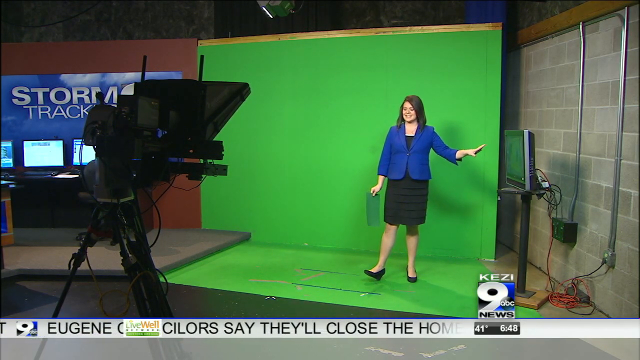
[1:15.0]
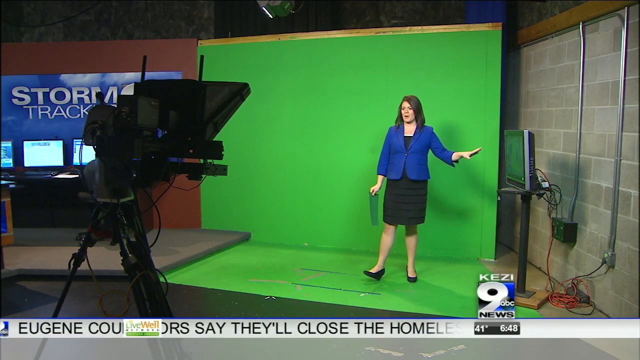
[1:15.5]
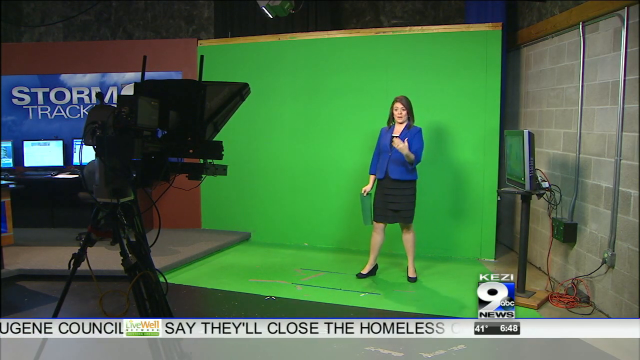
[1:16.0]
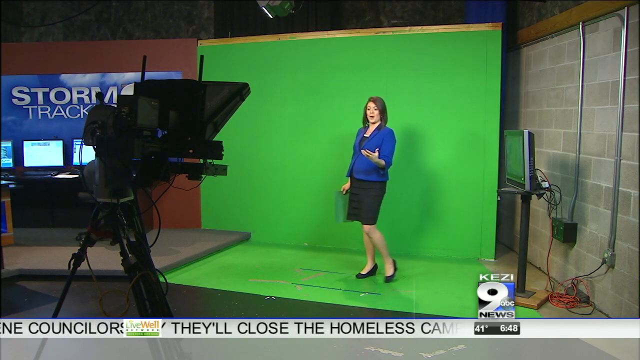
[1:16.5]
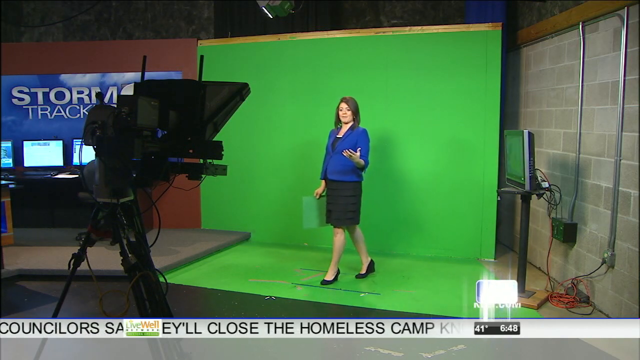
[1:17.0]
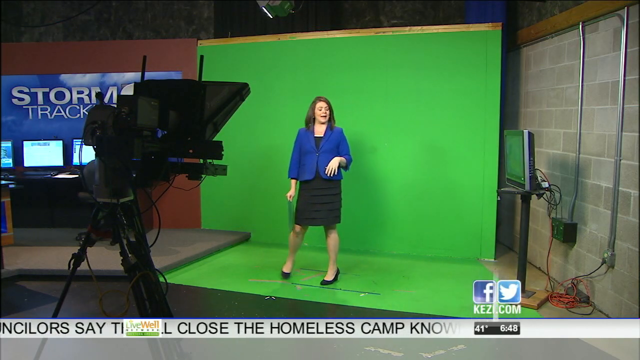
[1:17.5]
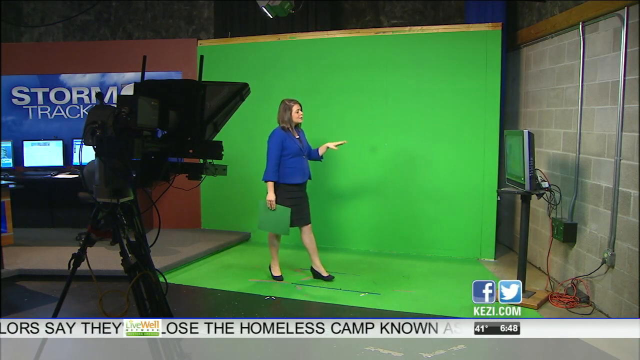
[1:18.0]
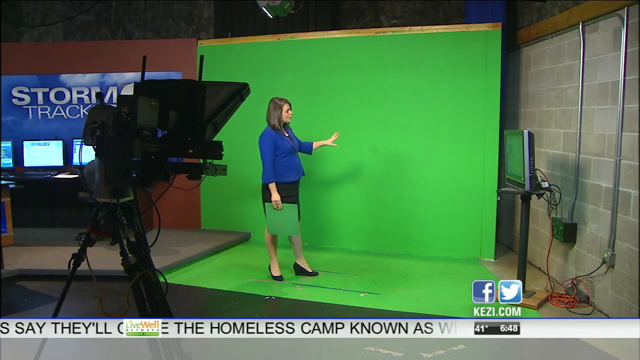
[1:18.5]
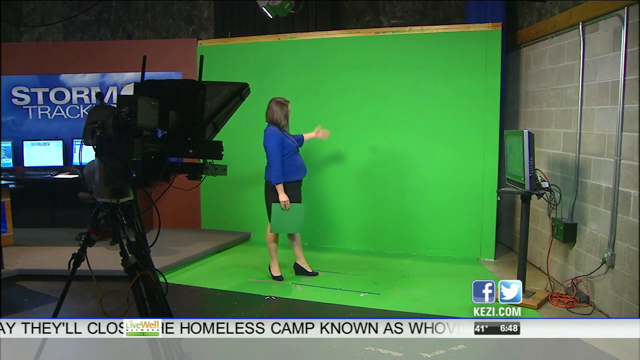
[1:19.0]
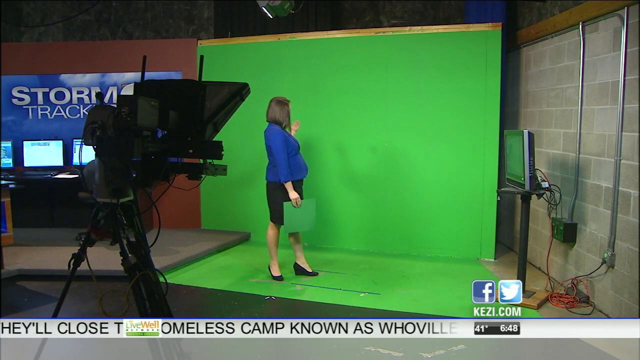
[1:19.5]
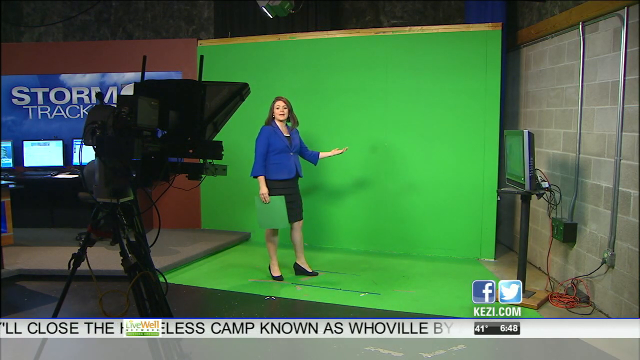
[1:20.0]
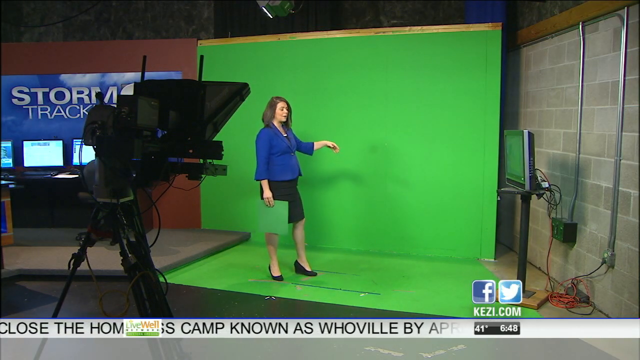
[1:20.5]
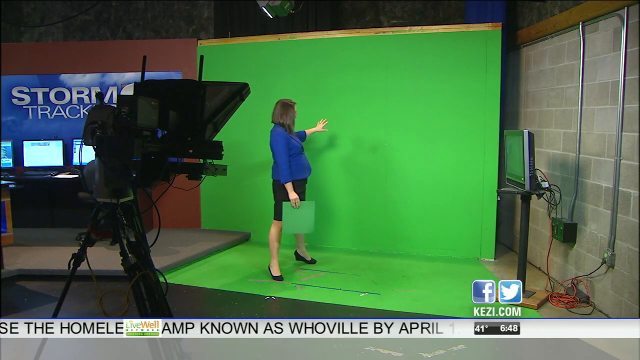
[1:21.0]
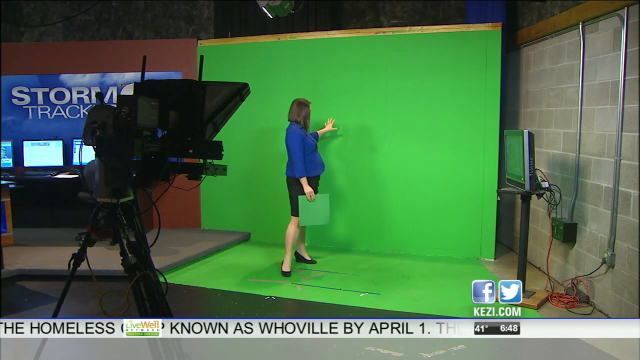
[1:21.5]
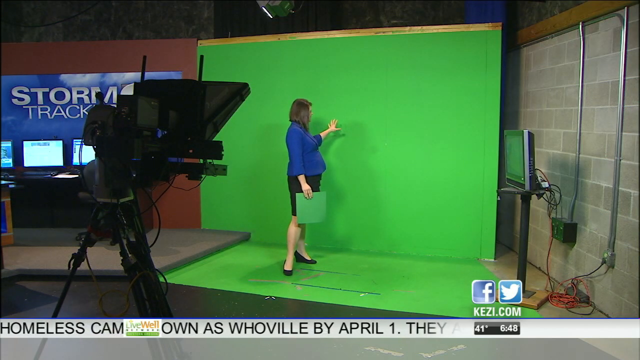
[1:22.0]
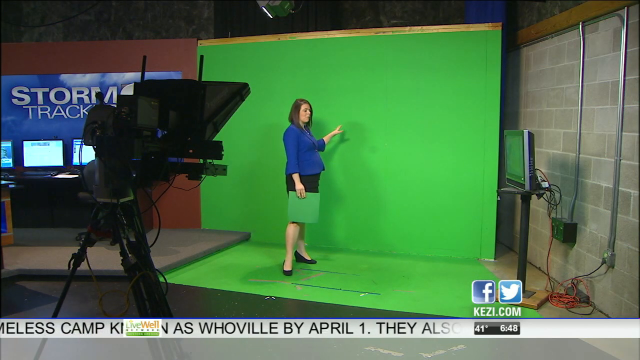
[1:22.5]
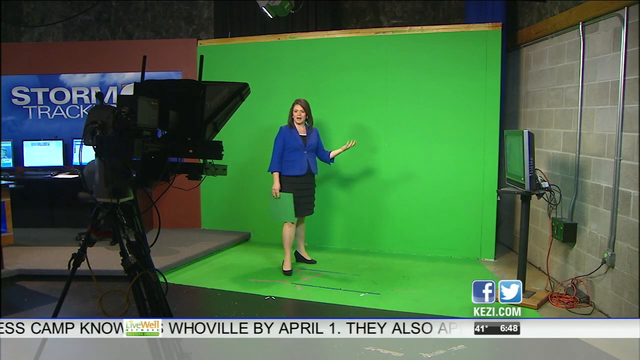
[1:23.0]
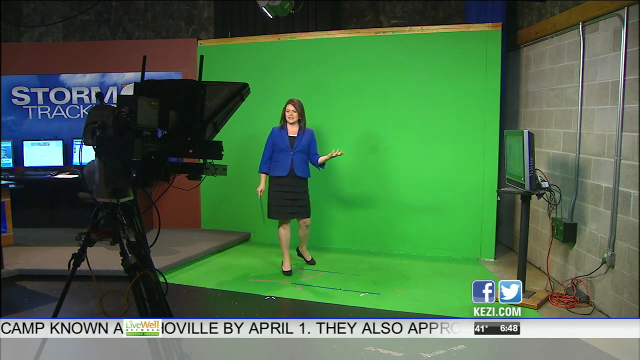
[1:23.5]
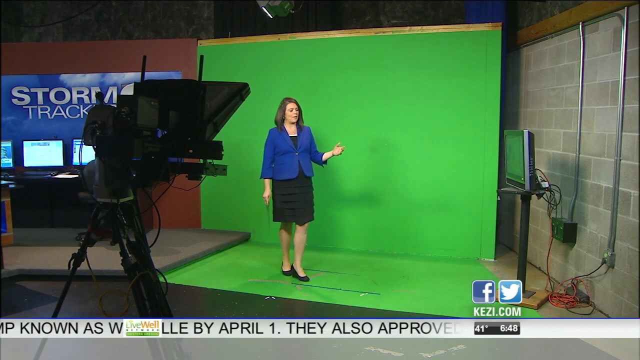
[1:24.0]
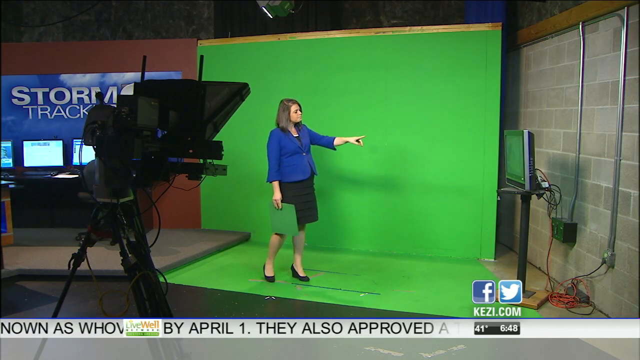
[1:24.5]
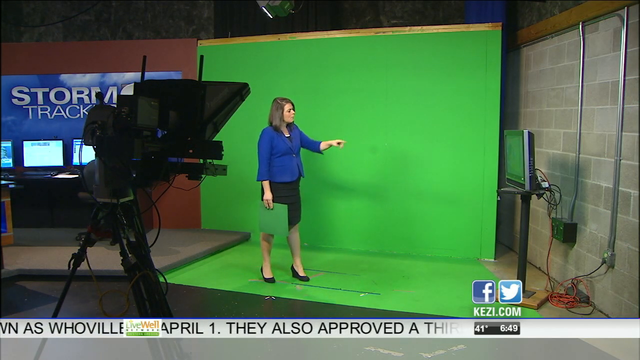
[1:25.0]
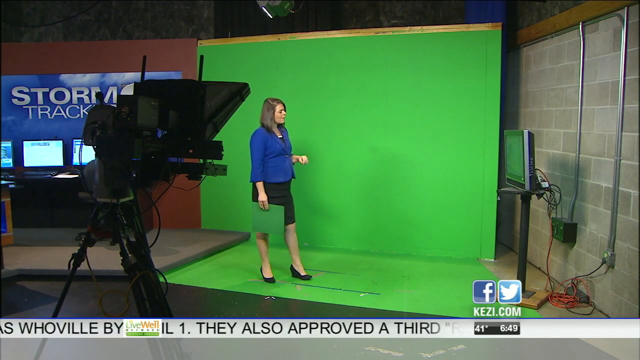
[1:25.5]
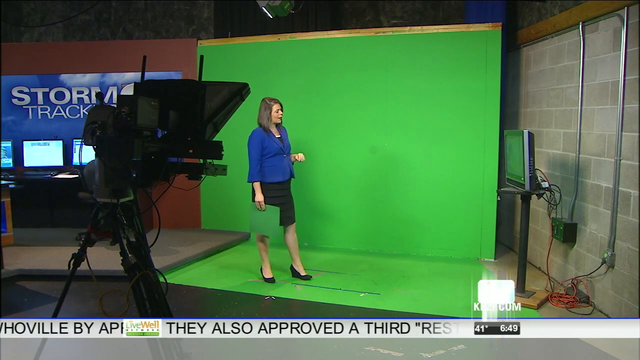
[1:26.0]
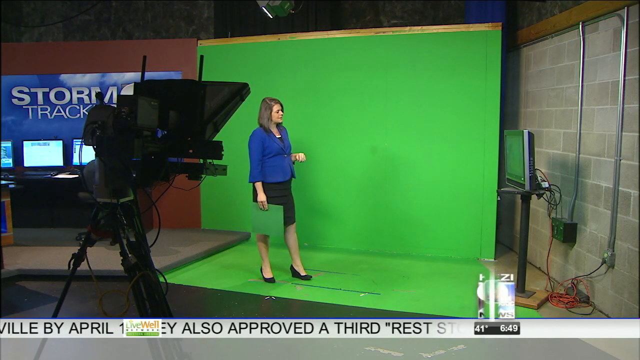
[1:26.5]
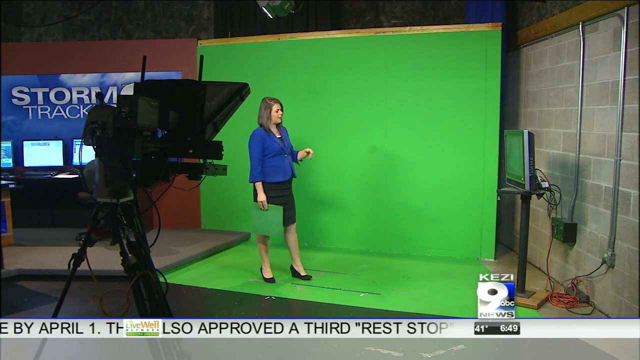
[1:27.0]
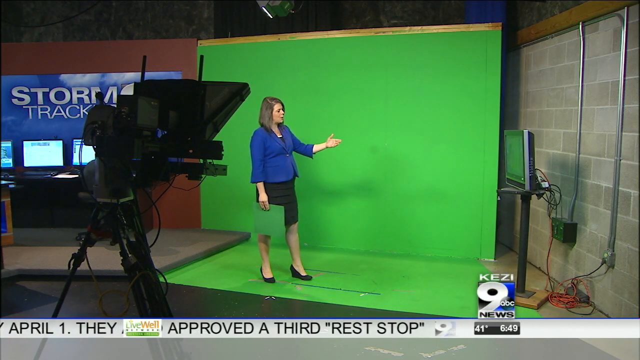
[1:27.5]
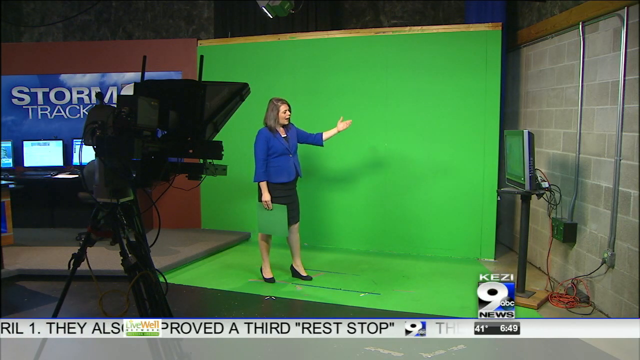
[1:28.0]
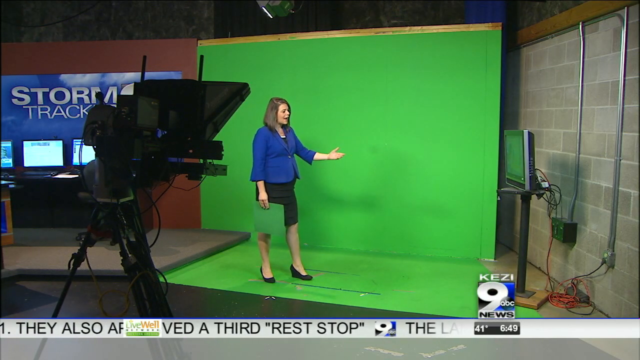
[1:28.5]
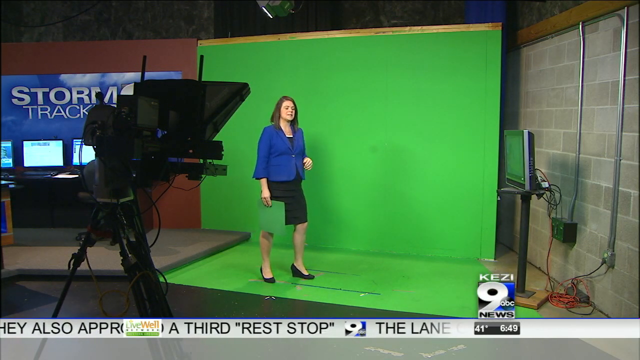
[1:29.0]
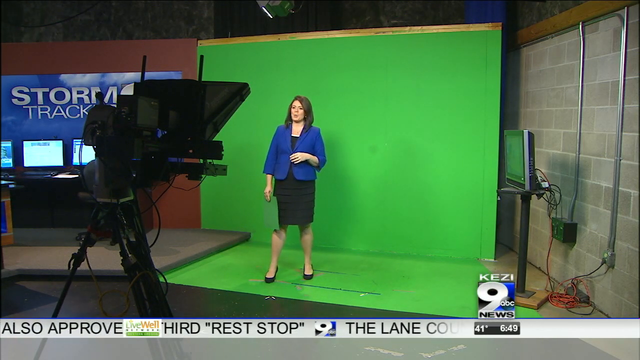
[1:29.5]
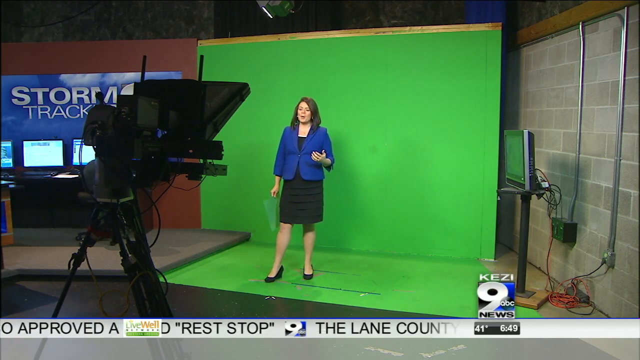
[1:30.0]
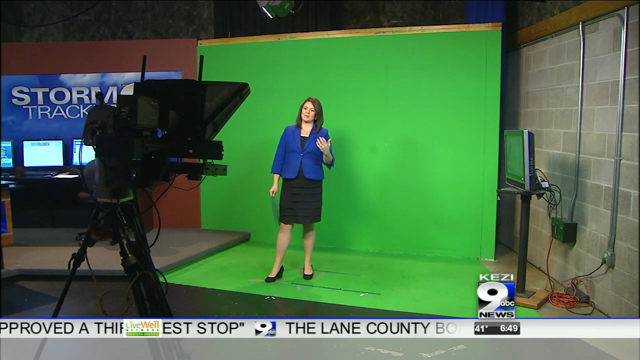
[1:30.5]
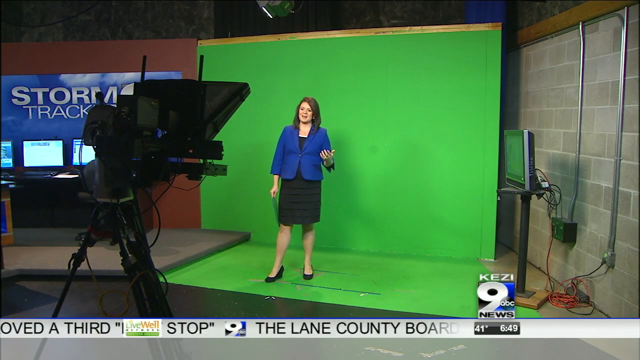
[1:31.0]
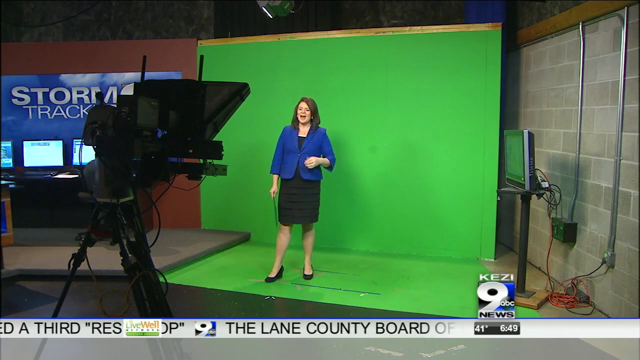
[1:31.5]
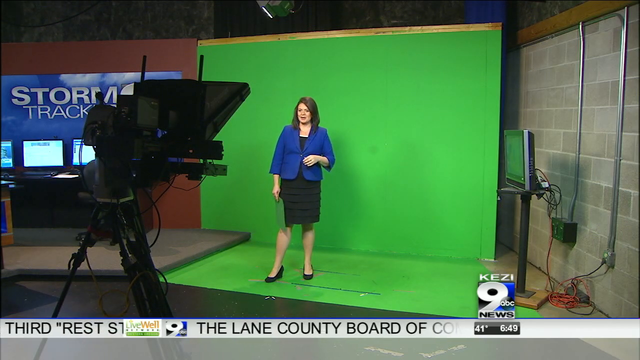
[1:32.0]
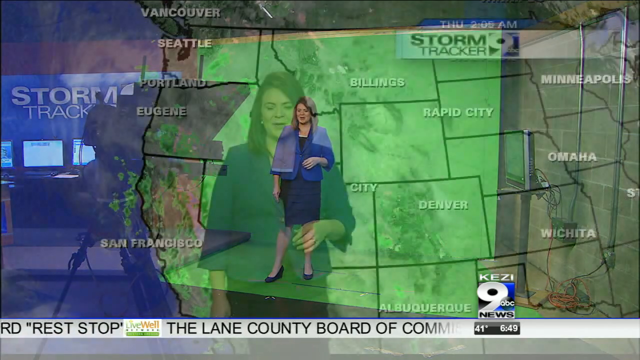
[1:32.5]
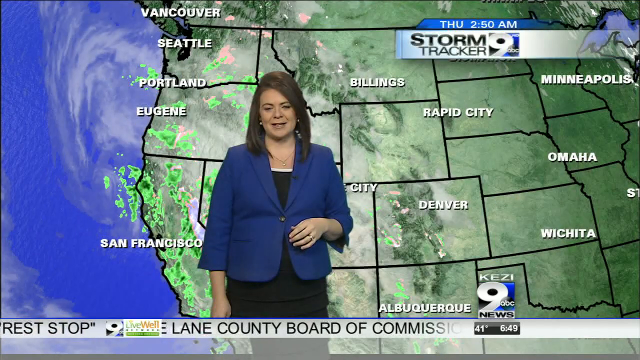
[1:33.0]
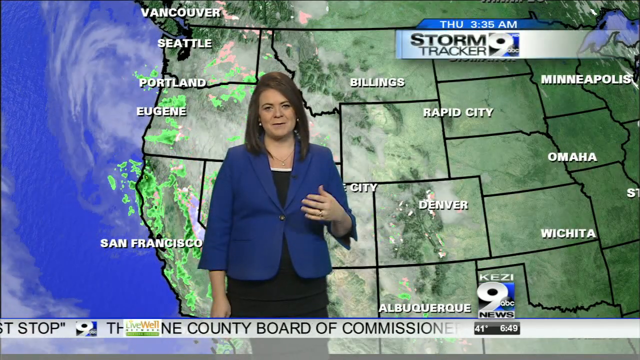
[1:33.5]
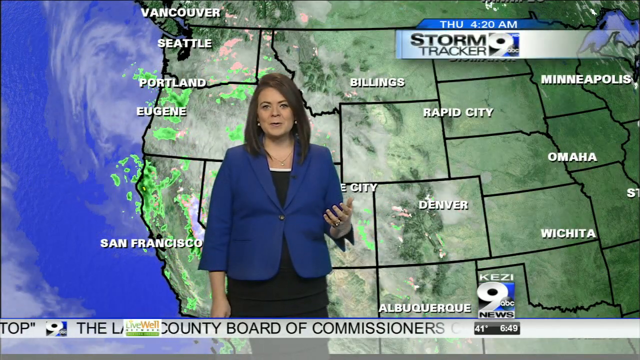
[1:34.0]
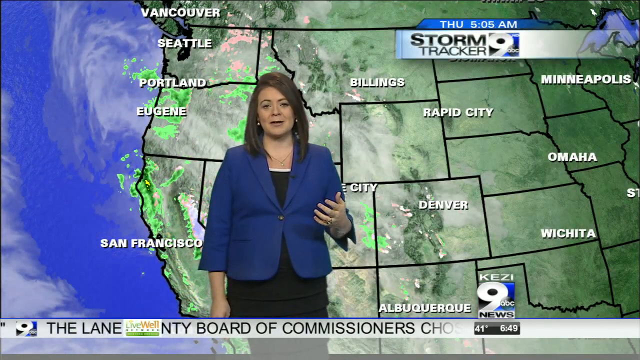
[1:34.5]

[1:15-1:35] A female meteorologist shows off a weather map. It opens with a behind-the-scenes view of the room she is in: cinder block style walls, a computer monitor off to the side, a blank green screen behind her, and a video camera off to the side in front of her that perhaps has a teleprompter on it, though this cannot quite be seen from the angle. She stands talking. She wears a blue suit jacket, a black dress and black shoes, and has long brown hair. She walks back and forth, pointing at the wall, at the monitor and at other things. The video then cuts to the view seen on television: she stands in front of a weather map of the United States with the weather in motion behind her where she points. A moving banner runs across the bottom of the screen with headlines for different news stories.